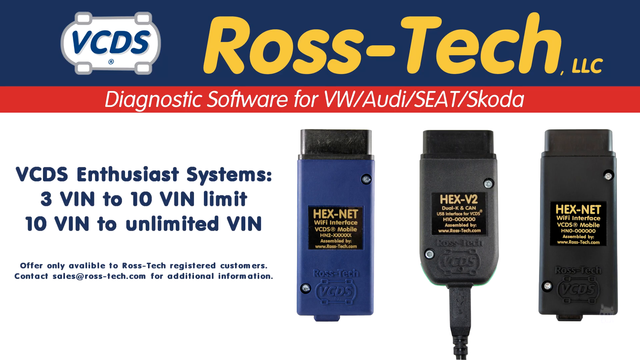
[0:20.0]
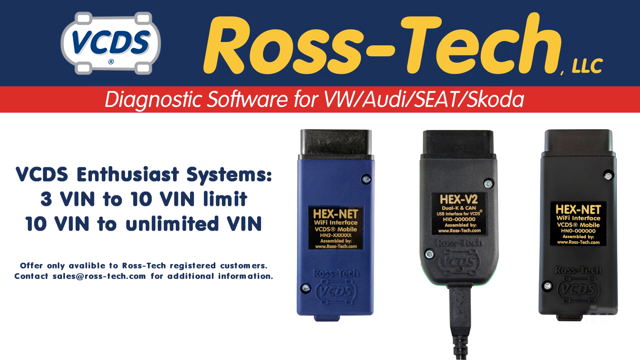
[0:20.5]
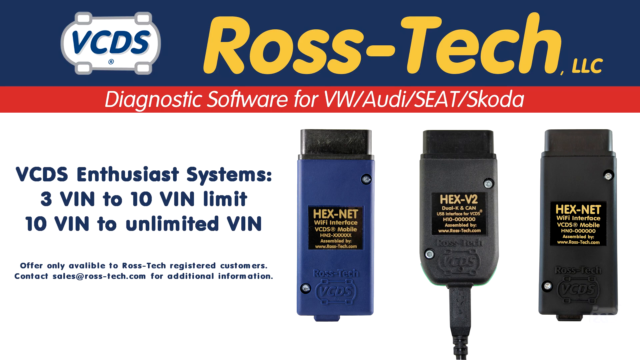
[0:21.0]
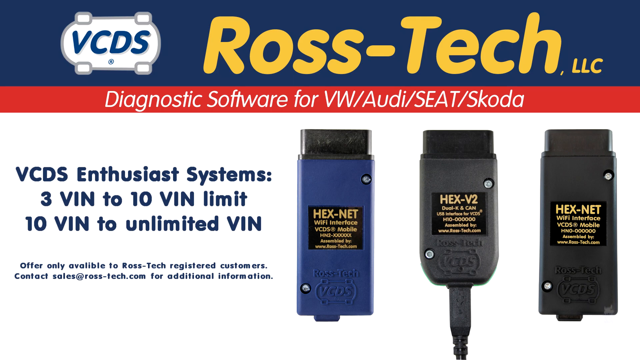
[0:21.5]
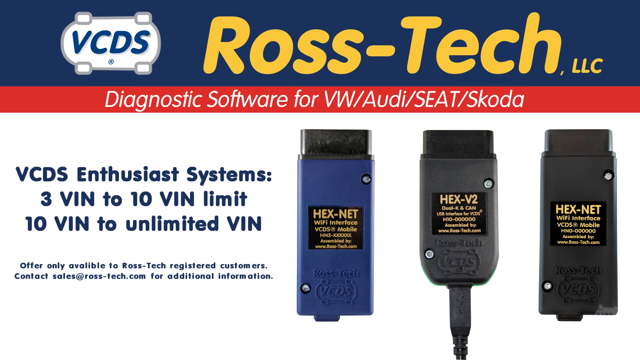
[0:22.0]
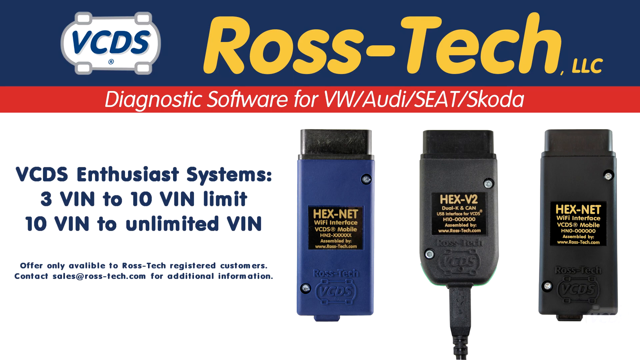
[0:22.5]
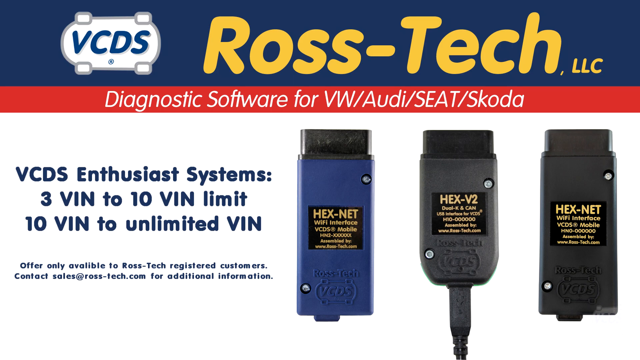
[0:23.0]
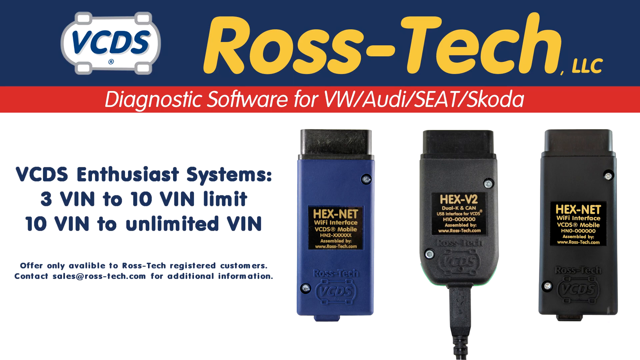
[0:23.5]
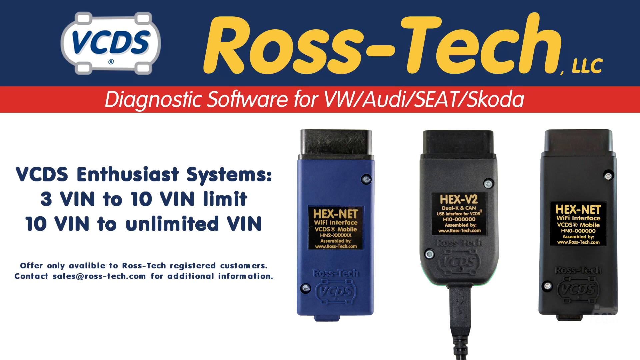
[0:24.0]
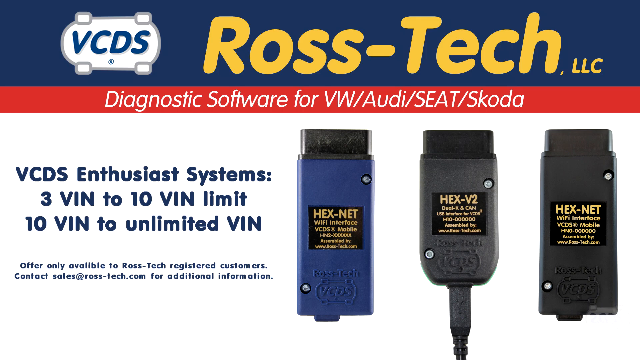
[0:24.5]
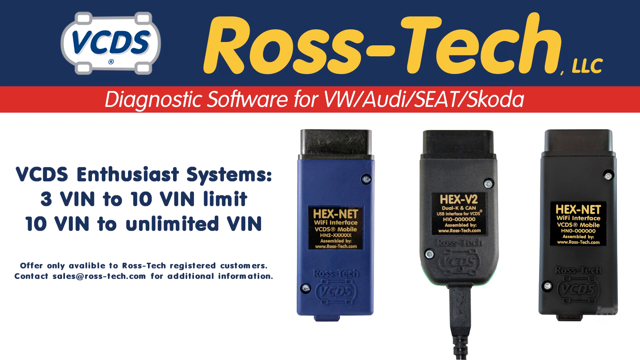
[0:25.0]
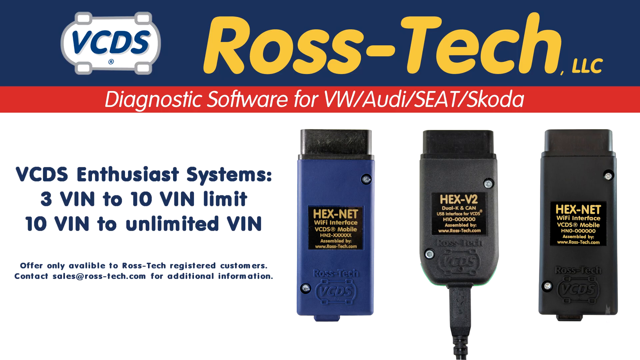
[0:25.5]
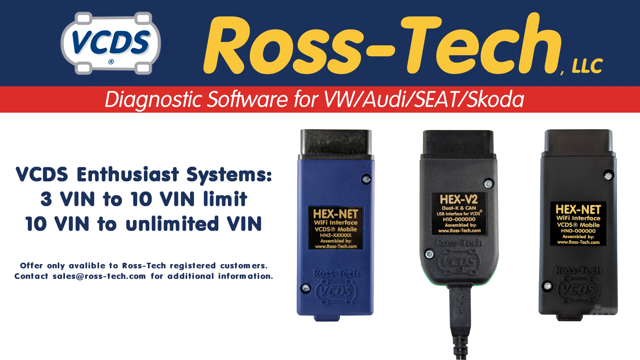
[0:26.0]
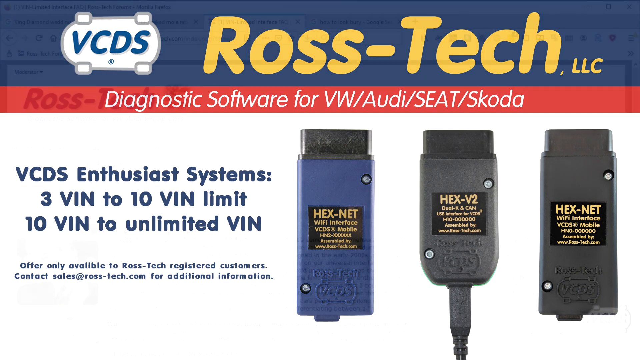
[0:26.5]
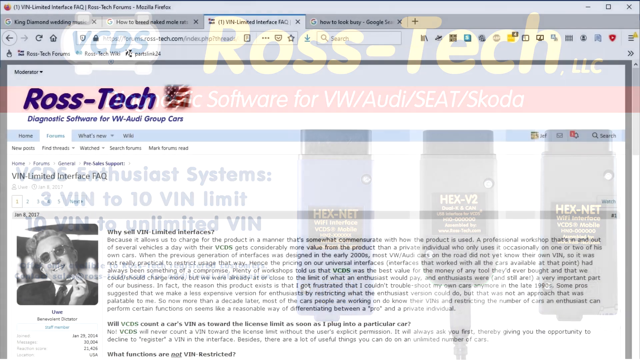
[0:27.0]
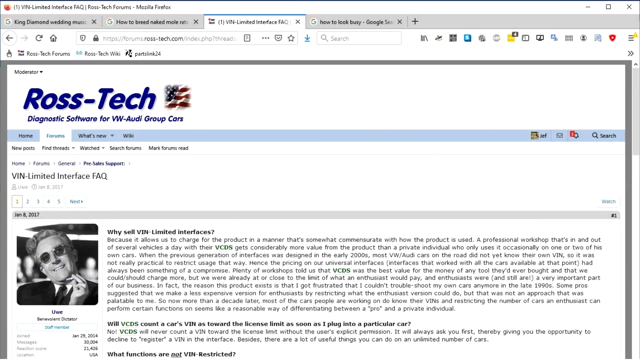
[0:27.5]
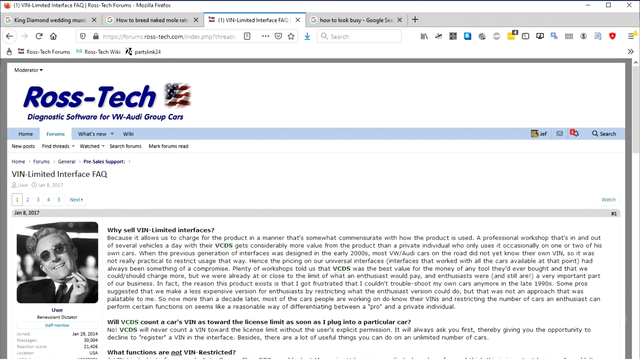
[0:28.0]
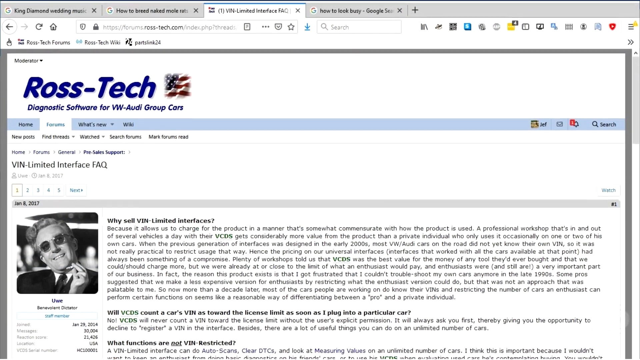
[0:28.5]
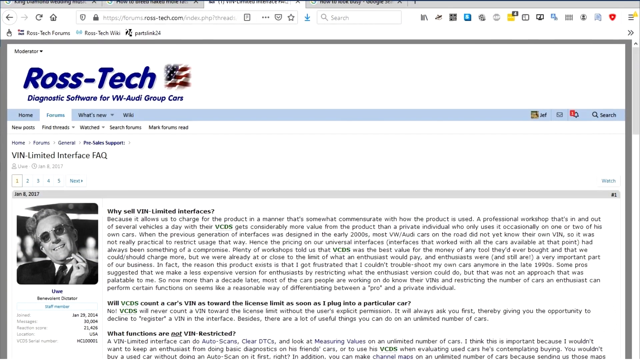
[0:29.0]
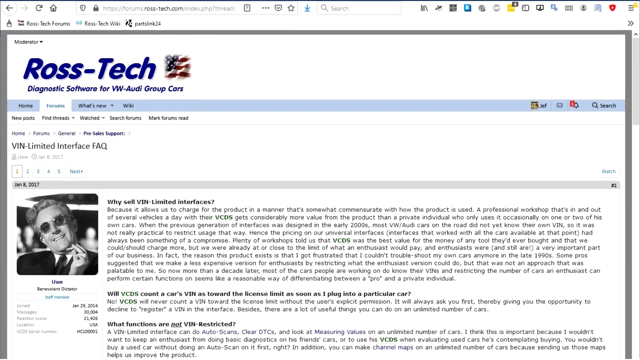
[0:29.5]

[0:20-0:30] The company name "Ross Tech LLC" appears in bold bright yellow text on a blue header. In the upper left corner is the logo, an oblong white shape with what appears to be four tires, reading "VCDS" in dark blue capital letters. Below it a narrow red banner reads "diagnostic software for VW/Audi/SEAT/Skoda." Beneath that are three objects that look like charger ends, one blue and the two to the right black. Text reads "VCDS enthusiast systems," "3 VIN to 10 VIN limit" and "10 VIN to unlimited," and in smaller text "offer only available to Ross Tech registered customers contact sales at RossTech.com for additional information." A page of information about the interface FAQ then scrolls by.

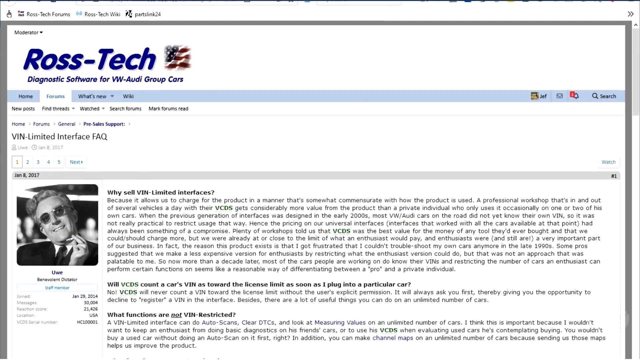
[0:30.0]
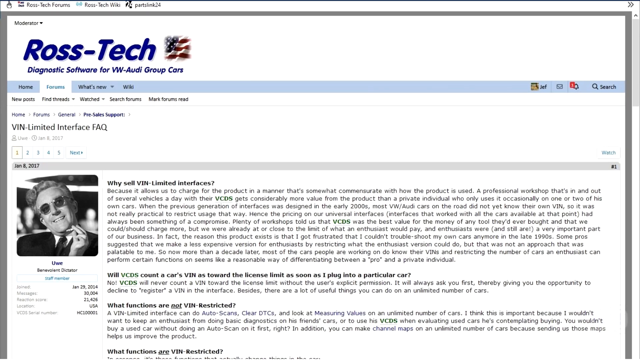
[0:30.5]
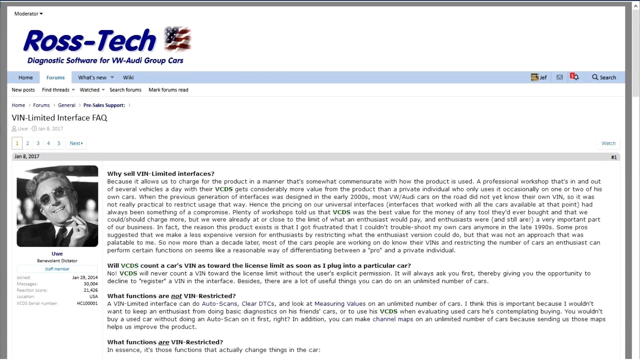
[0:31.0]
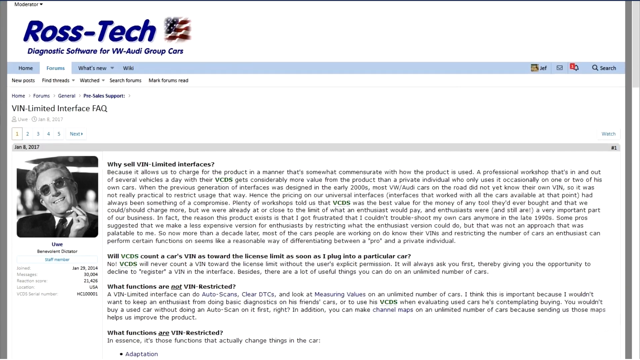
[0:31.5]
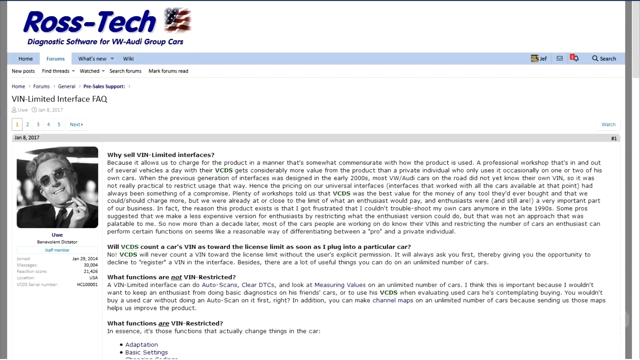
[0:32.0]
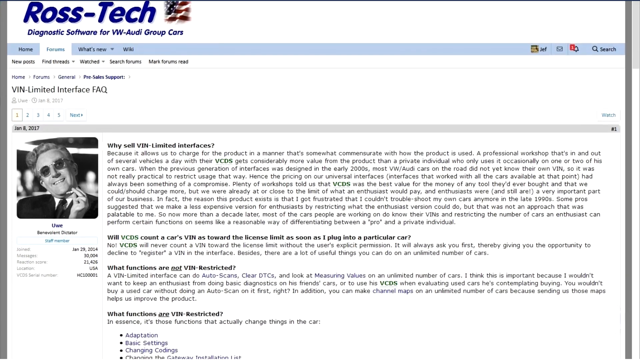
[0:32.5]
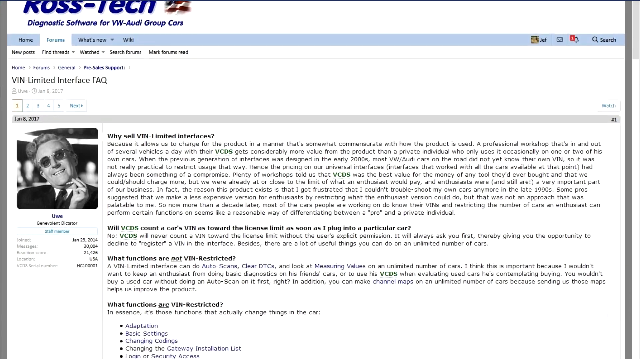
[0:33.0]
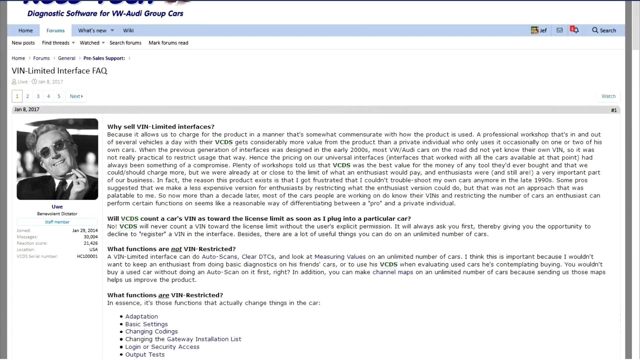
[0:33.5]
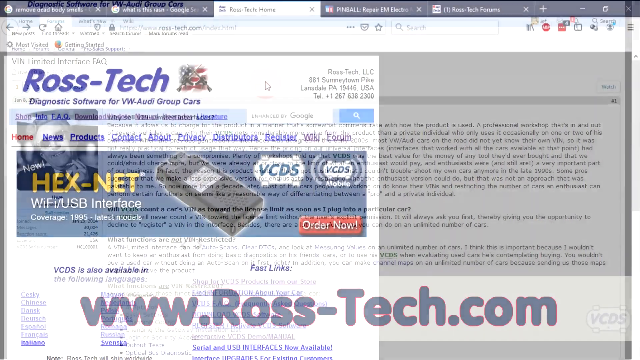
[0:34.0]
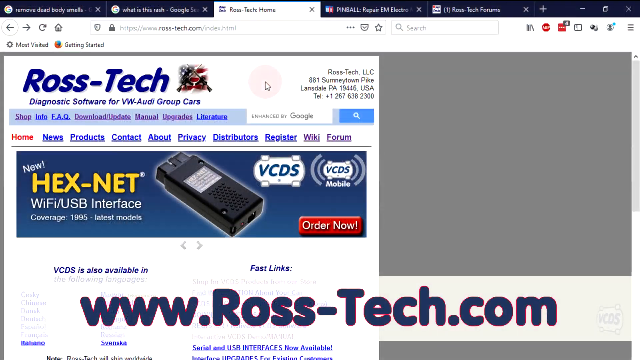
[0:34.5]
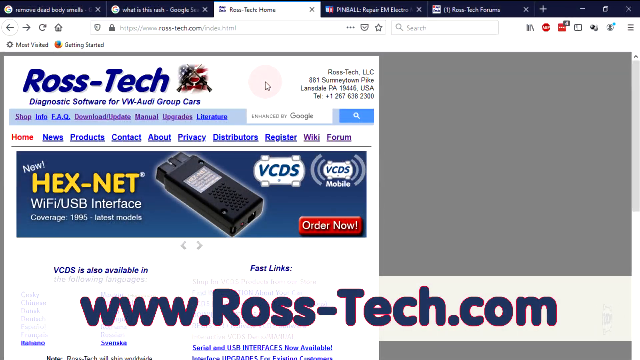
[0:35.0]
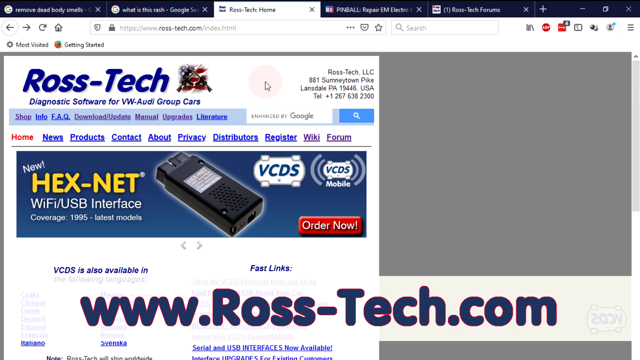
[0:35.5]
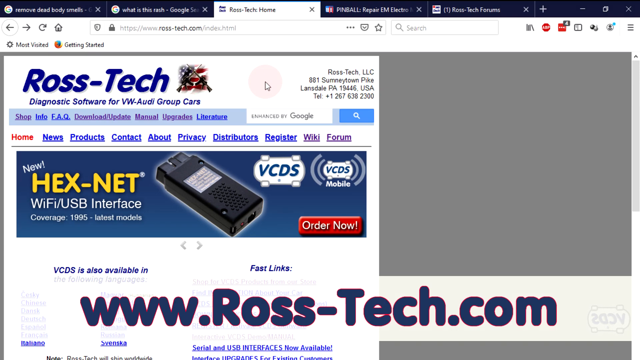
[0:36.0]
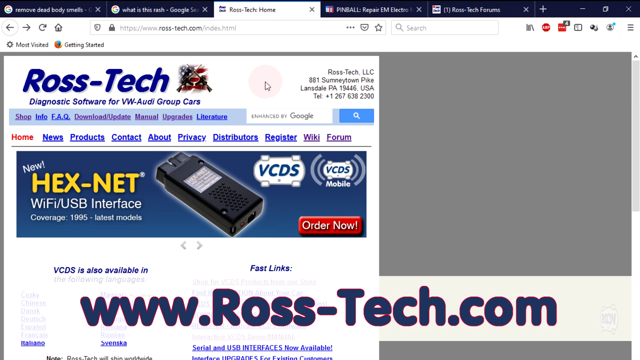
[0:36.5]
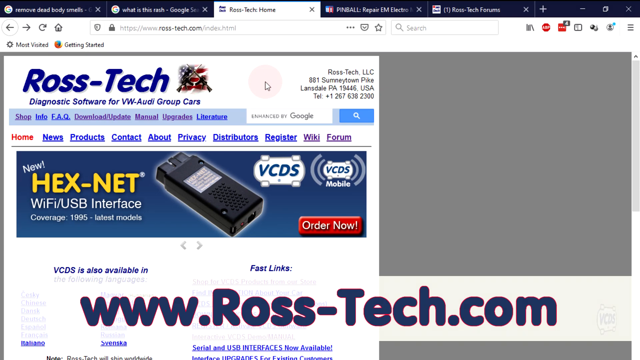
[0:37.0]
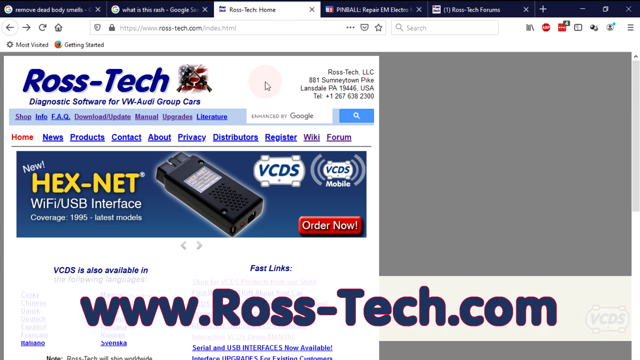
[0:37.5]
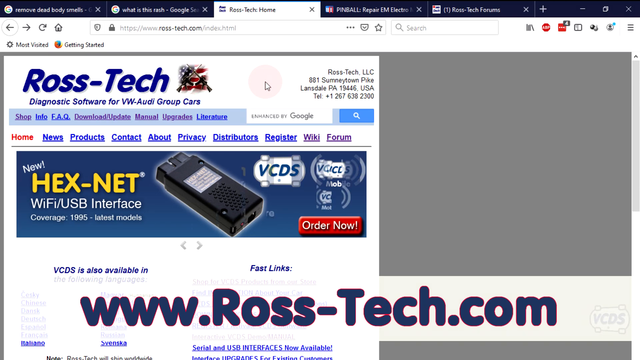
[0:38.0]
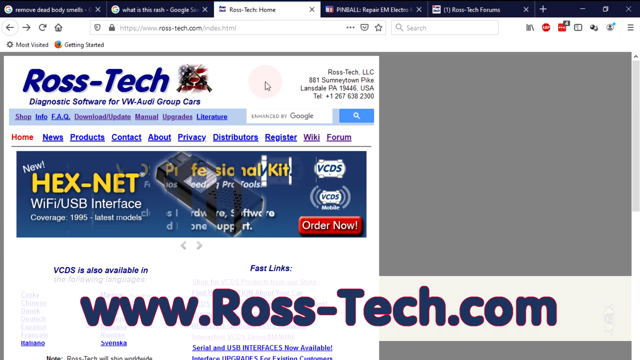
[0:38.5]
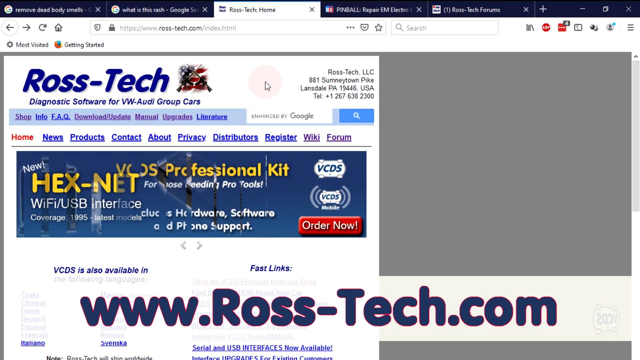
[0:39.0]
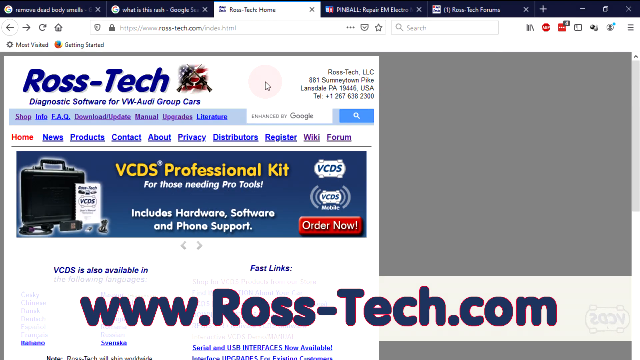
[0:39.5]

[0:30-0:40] A page of information from Ross Tech is shown, with the company name in bold blue text in the upper left corner. Below it the text reads "Diagnostic Software for VW Audi Group cars," and under that is a menu of buttons. From left to right are "Home" and then "Forums," which is currently open. The forum topic heading is "VIN Limited Interface FAQ." A somewhat blurry post asks the question "why sell VIN Limited Interfaces?" The page continues to scroll slowly downward. A white pop-up then appears on the left side of the screen advertising "Hexnet" in bold yellow text and "Wi-Fi USB interface," with a red "Order Now" button in the lower right corner of the advertisement.